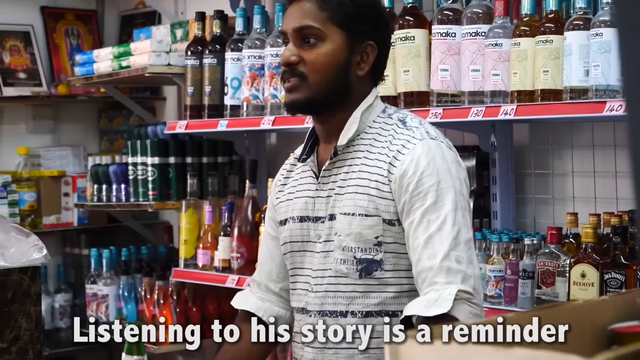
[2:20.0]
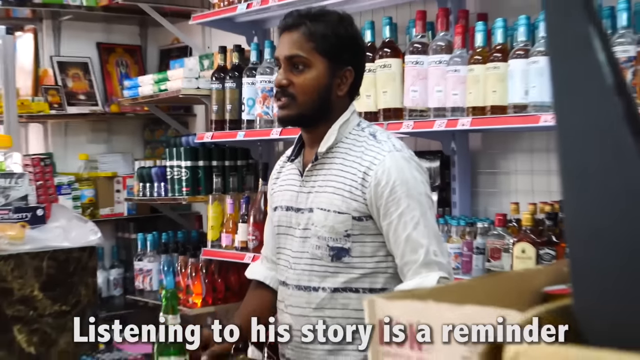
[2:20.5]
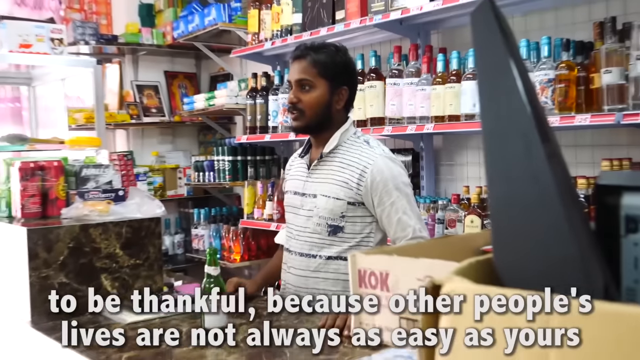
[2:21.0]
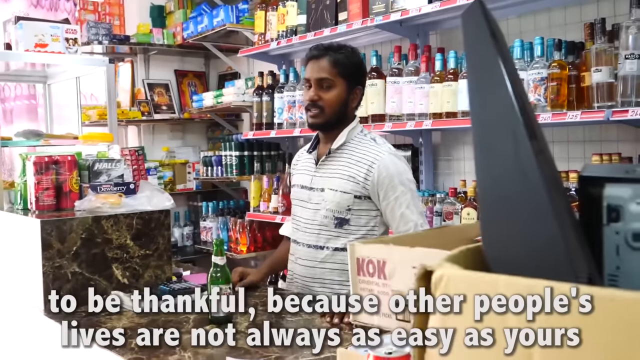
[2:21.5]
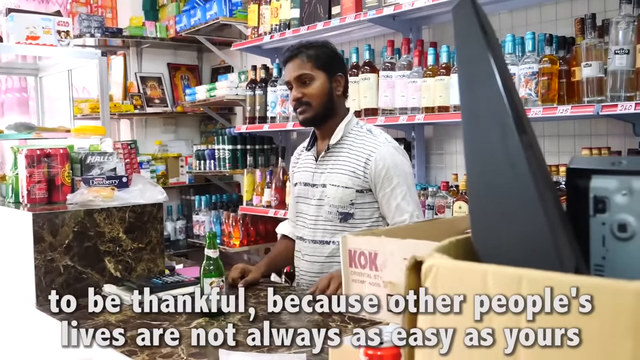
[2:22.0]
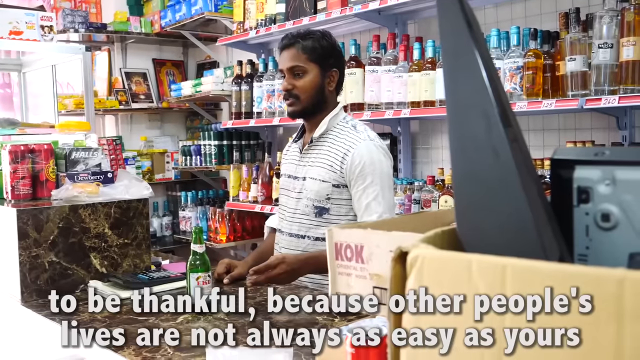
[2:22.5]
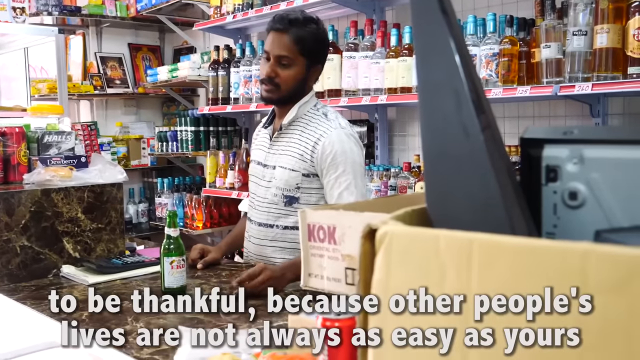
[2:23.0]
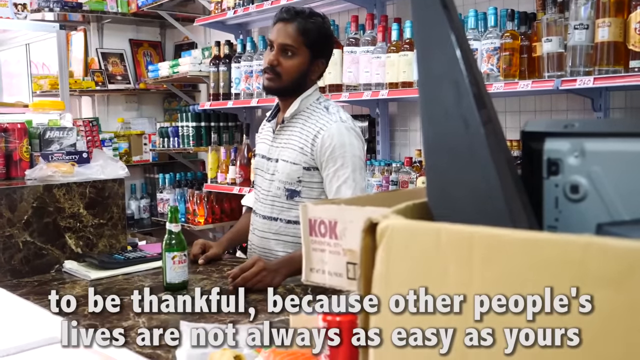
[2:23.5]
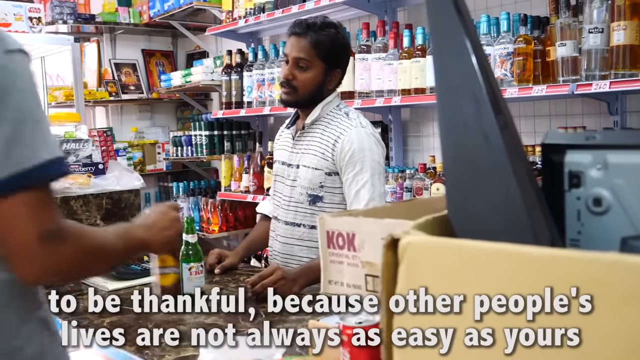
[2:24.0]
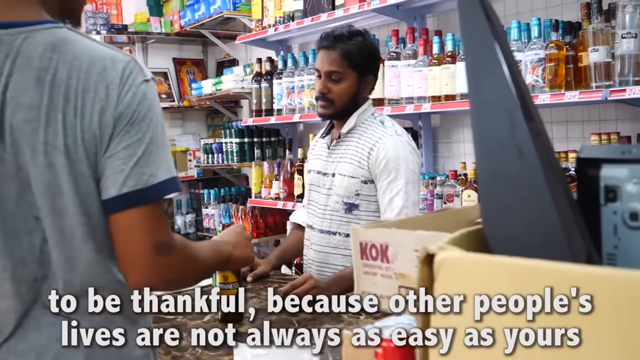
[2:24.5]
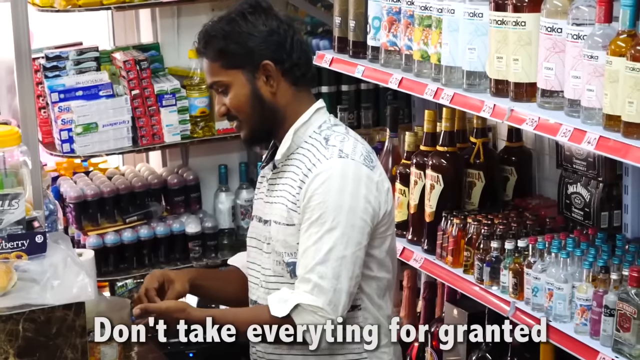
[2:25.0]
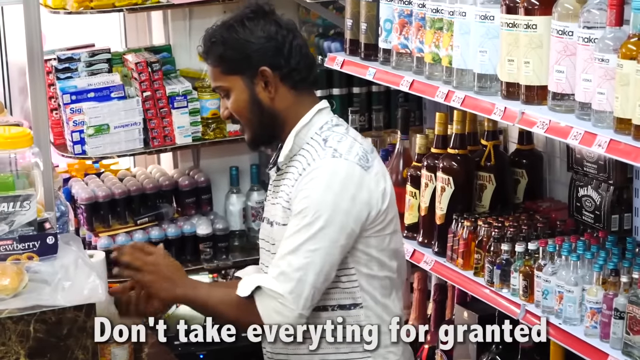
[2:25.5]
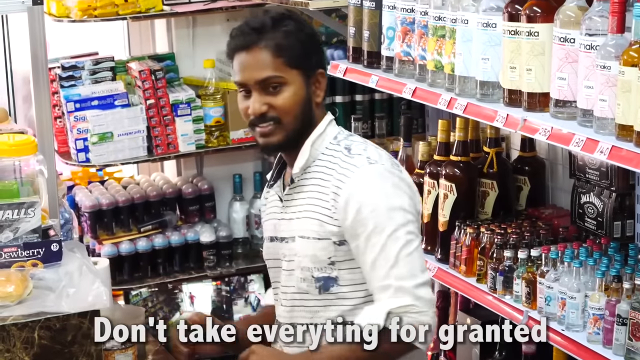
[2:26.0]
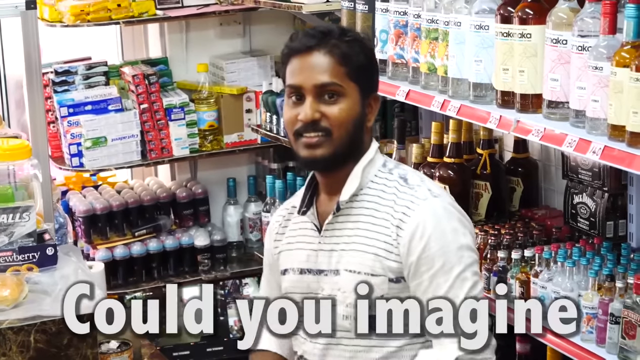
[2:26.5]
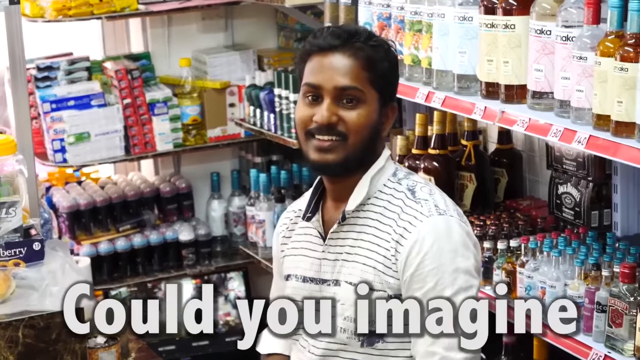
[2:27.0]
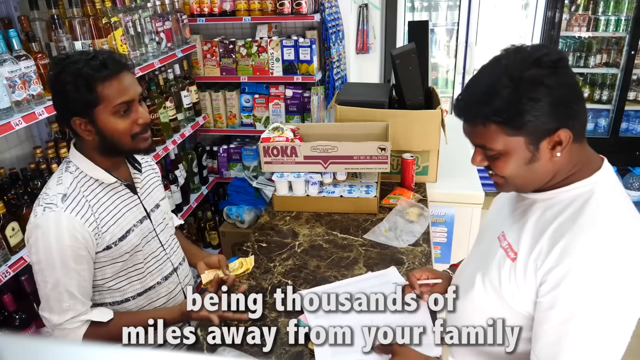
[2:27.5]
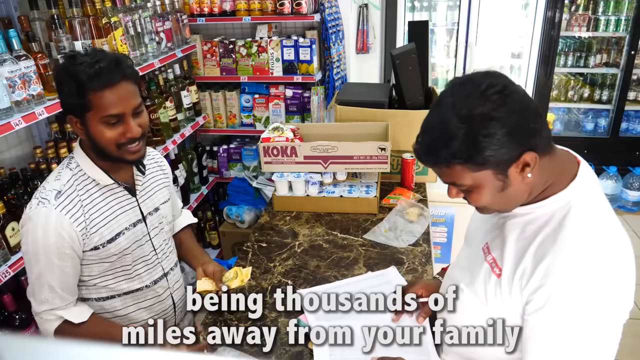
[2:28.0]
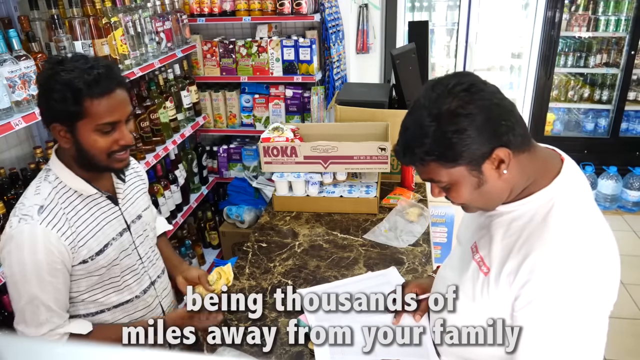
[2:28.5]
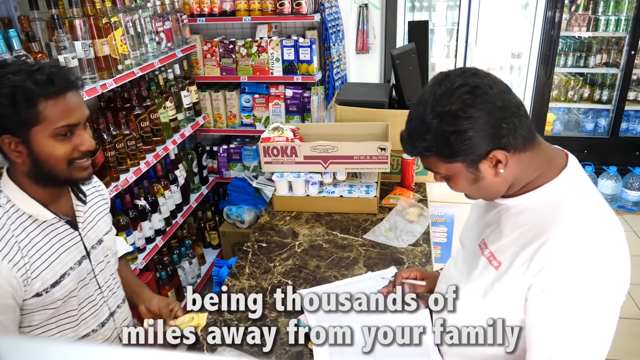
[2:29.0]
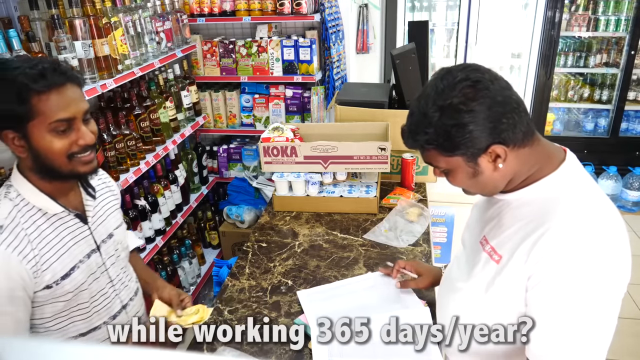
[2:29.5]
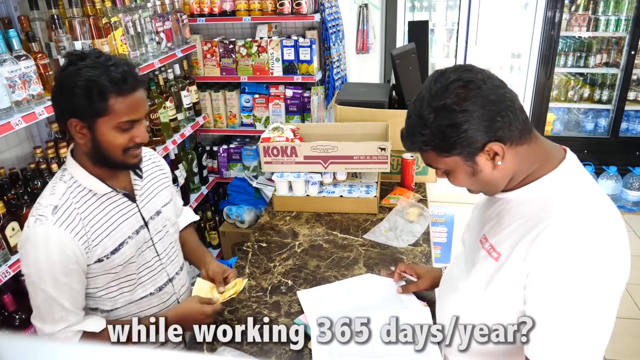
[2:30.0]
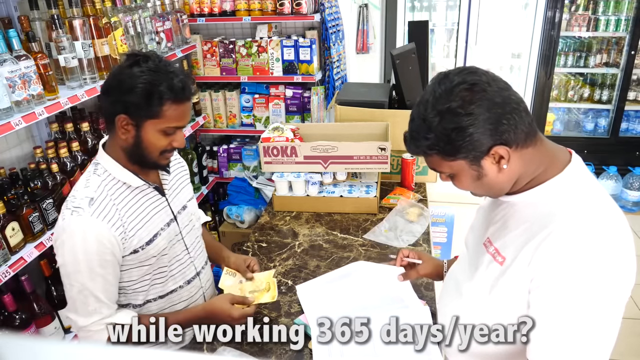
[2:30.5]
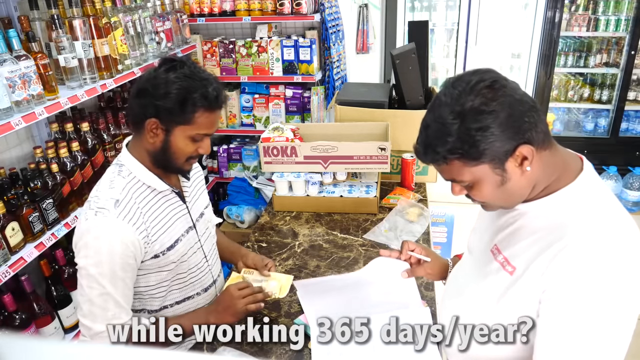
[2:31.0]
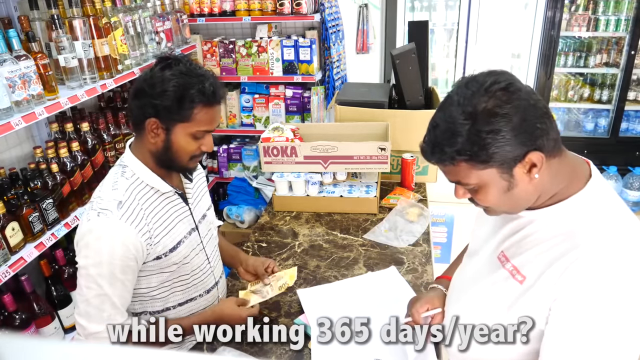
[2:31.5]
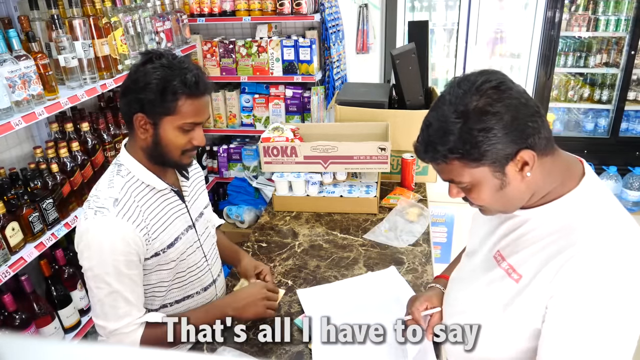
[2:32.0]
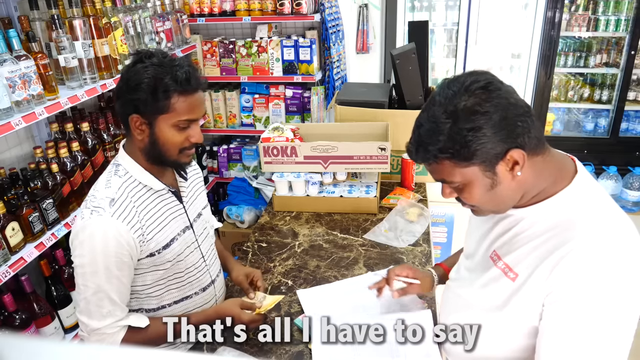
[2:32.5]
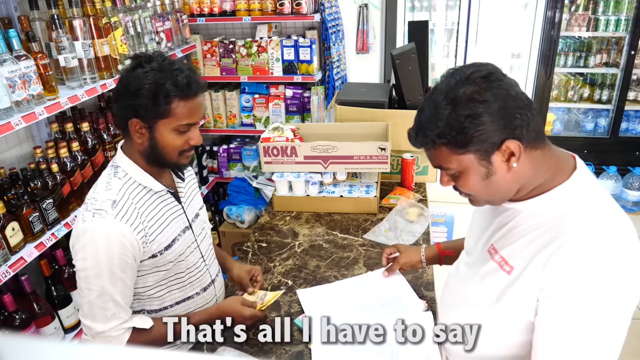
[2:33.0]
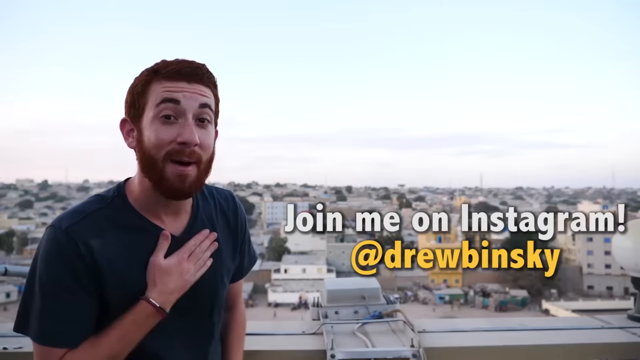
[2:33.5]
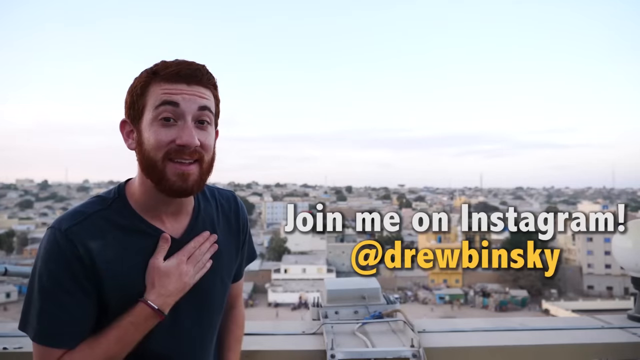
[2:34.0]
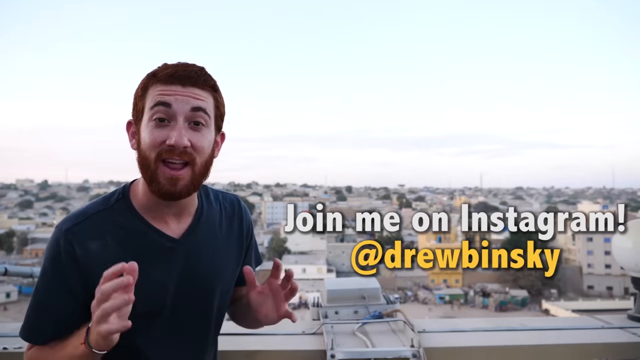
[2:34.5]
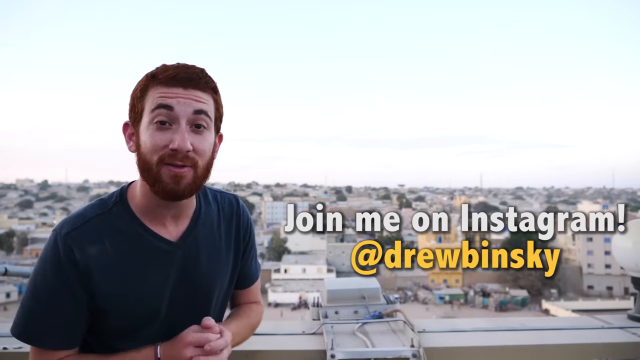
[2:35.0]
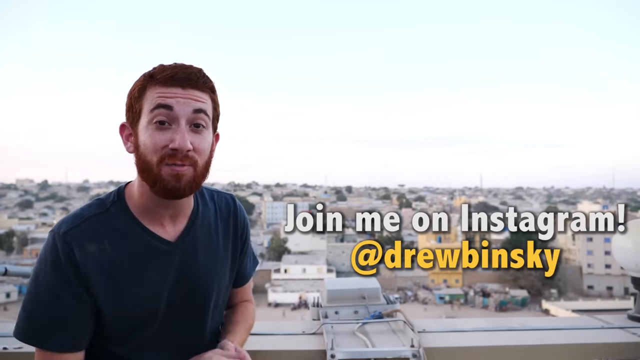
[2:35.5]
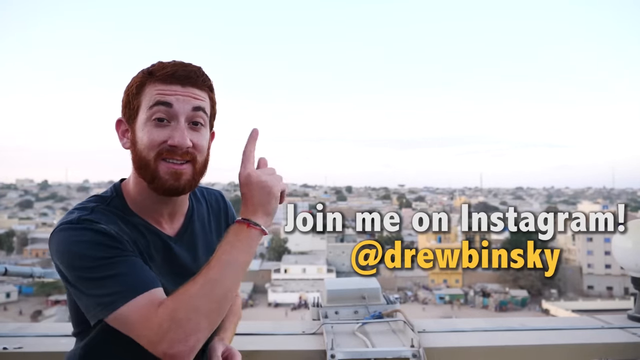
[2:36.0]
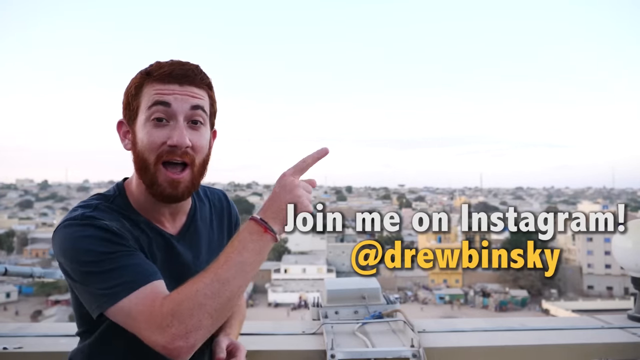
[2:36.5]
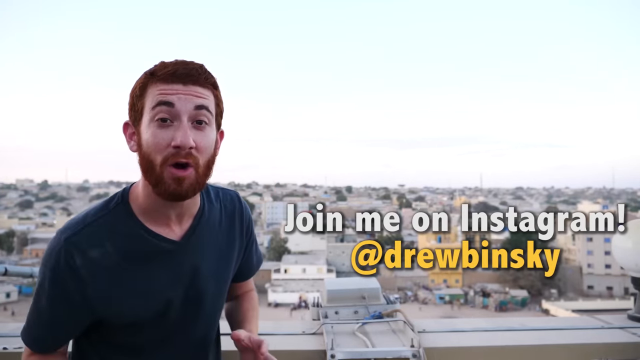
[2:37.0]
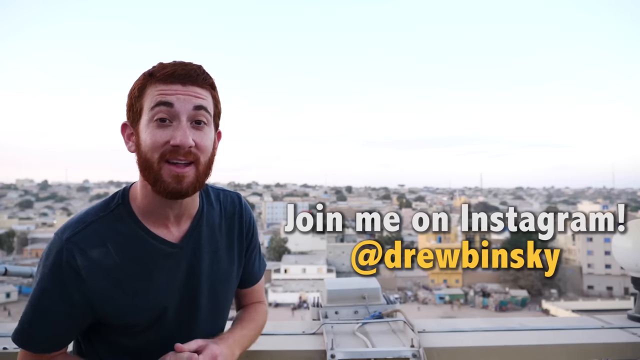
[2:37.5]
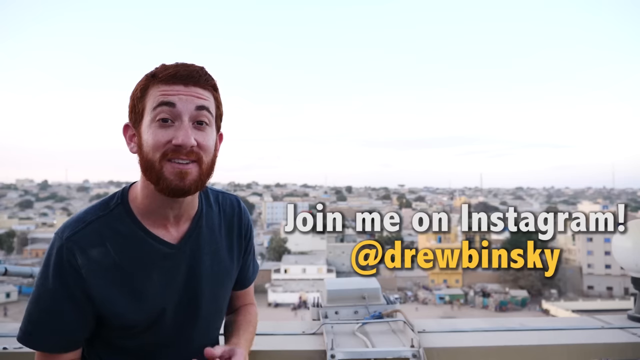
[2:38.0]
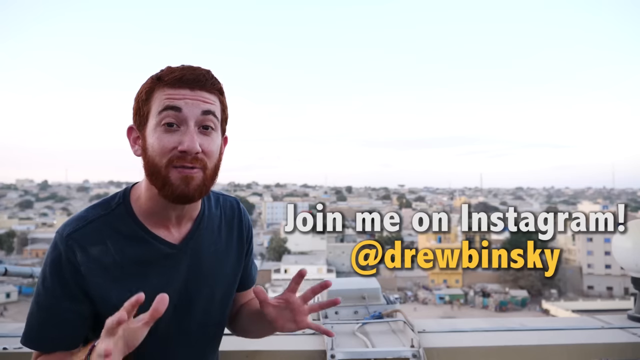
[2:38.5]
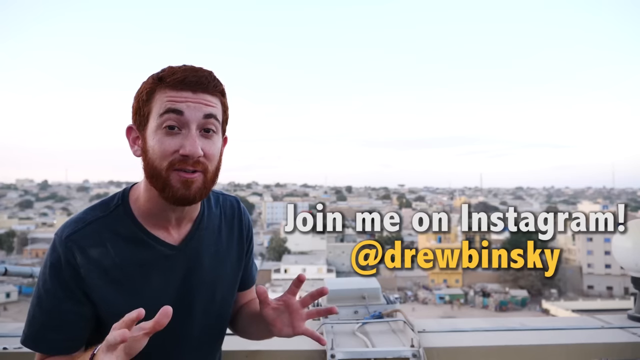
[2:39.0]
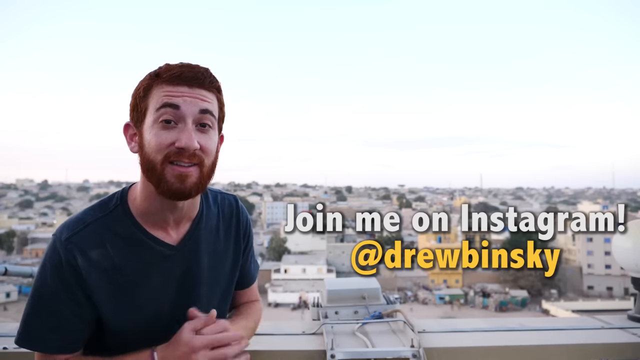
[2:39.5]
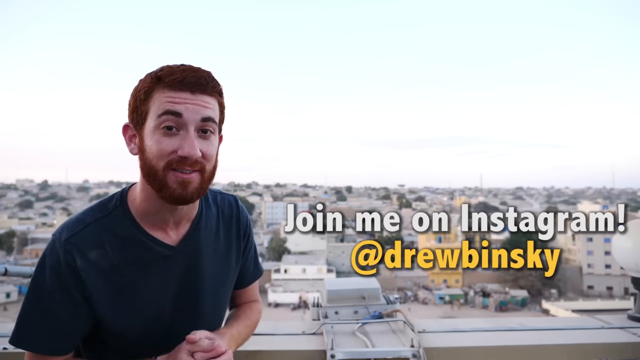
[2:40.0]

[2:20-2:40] The customer gives the shop owner the money and the empty bottles, and he puts empty bottles in a plastic bag. Another customer, another Indian man, enters the shop; he has no beard but has a mustache, black hair, small earrings and a white t-shirt. He and the owner stand at the counter. A book or file is in front of him, and he holds something to write with, possibly a pen or pencil. The owner holds money in his left hand: two notes.